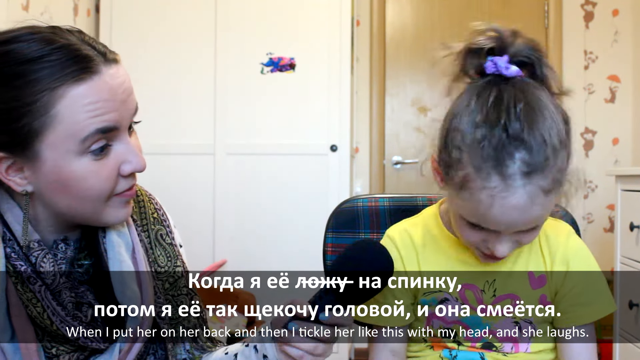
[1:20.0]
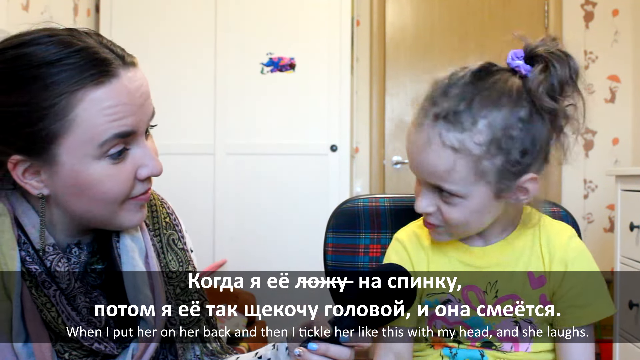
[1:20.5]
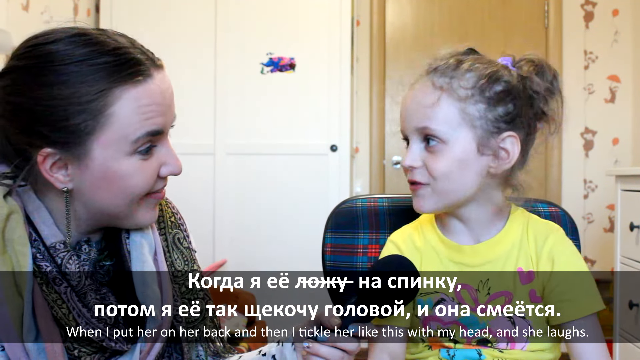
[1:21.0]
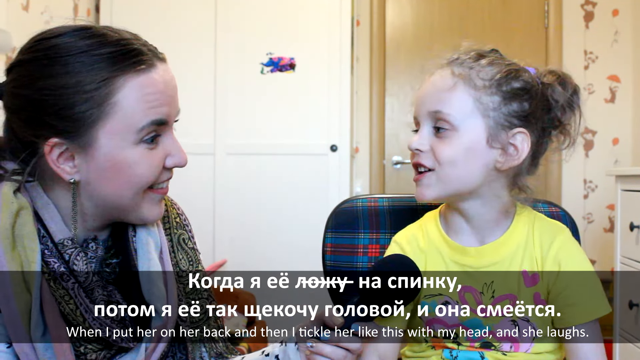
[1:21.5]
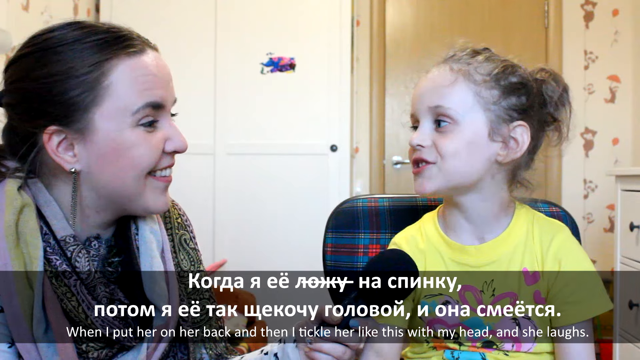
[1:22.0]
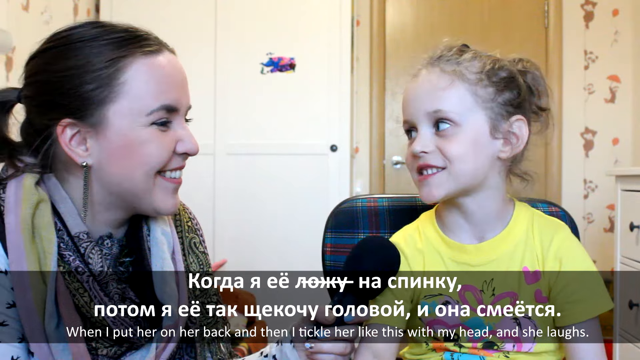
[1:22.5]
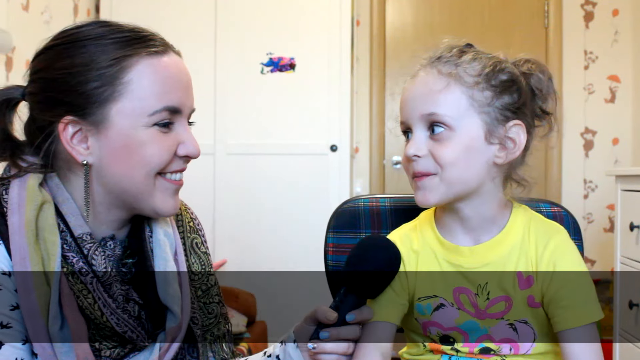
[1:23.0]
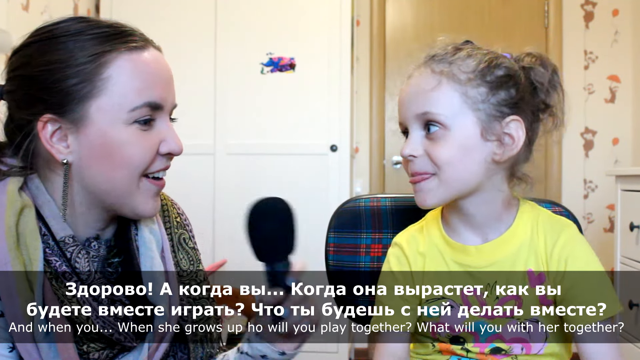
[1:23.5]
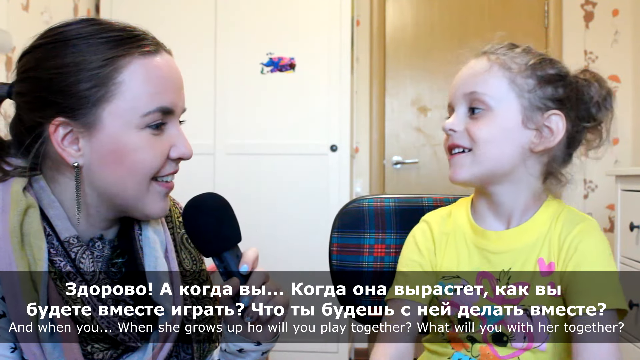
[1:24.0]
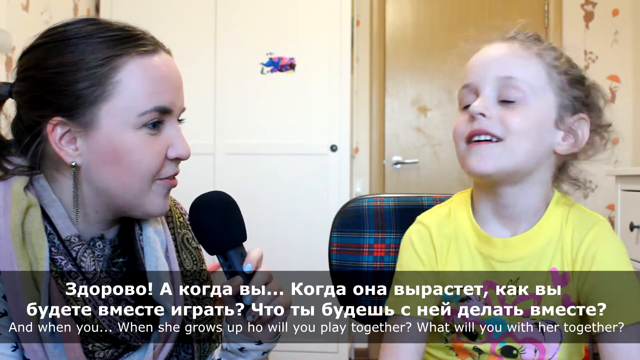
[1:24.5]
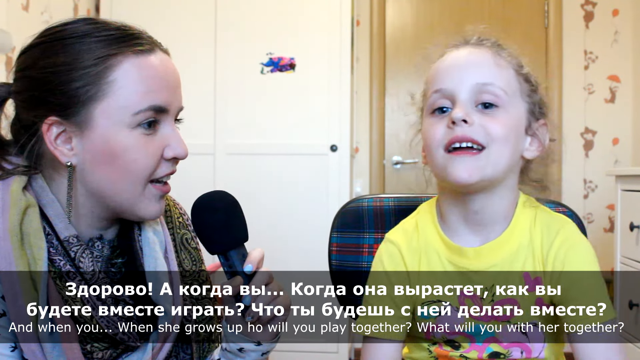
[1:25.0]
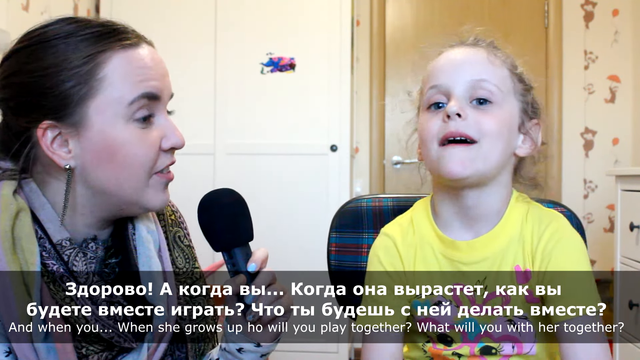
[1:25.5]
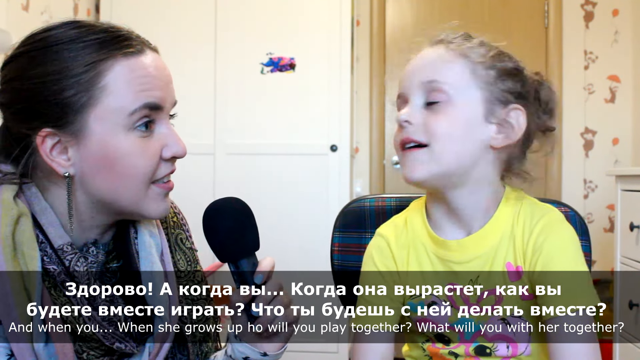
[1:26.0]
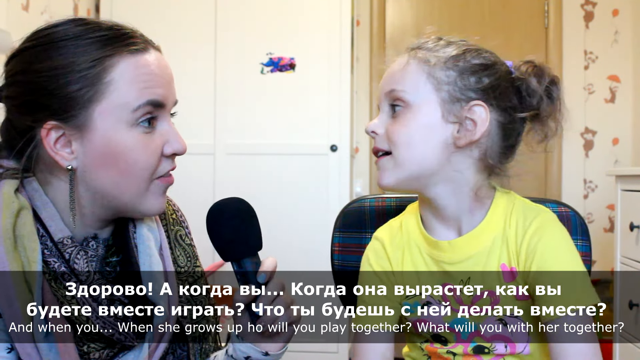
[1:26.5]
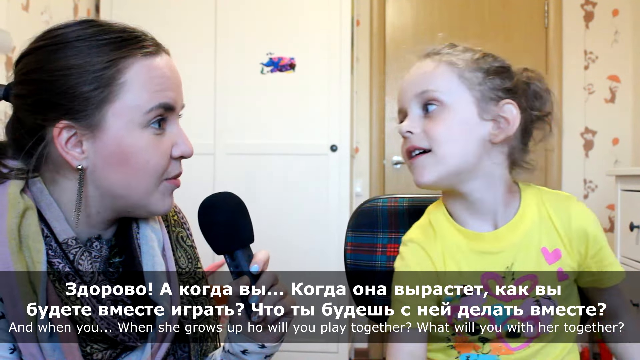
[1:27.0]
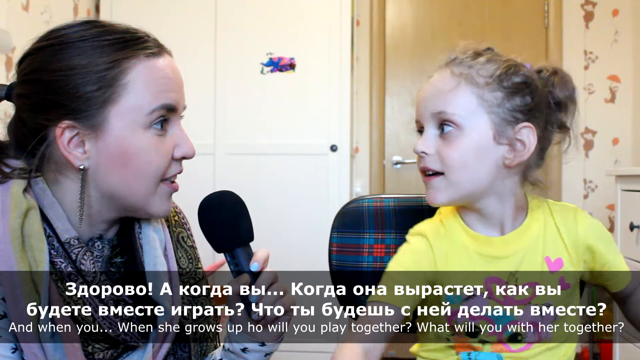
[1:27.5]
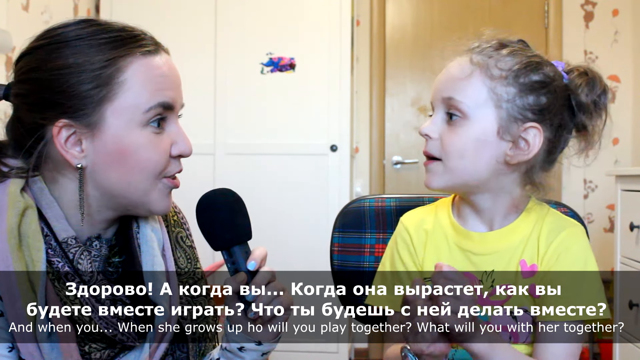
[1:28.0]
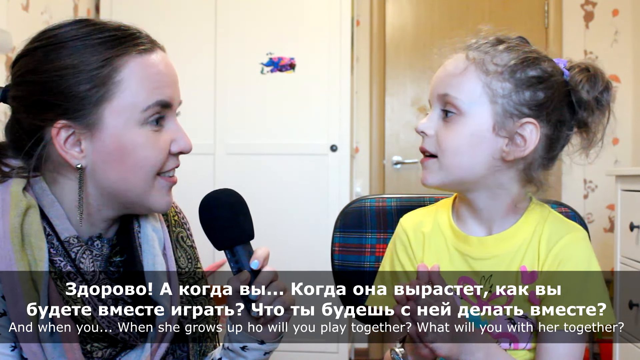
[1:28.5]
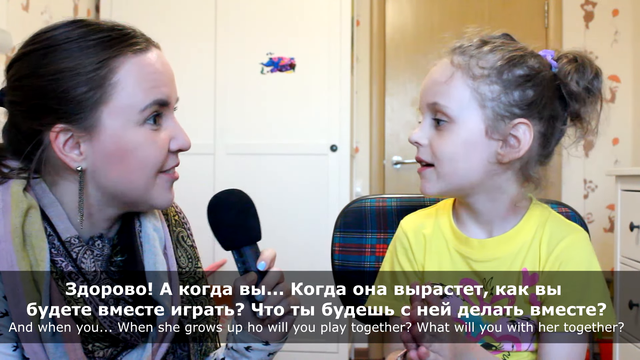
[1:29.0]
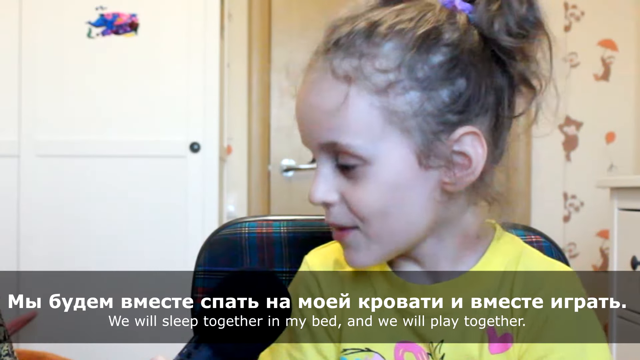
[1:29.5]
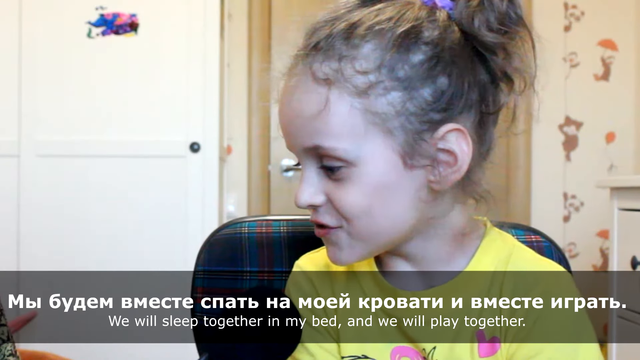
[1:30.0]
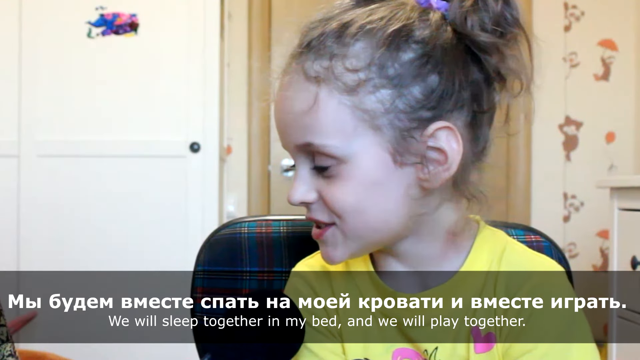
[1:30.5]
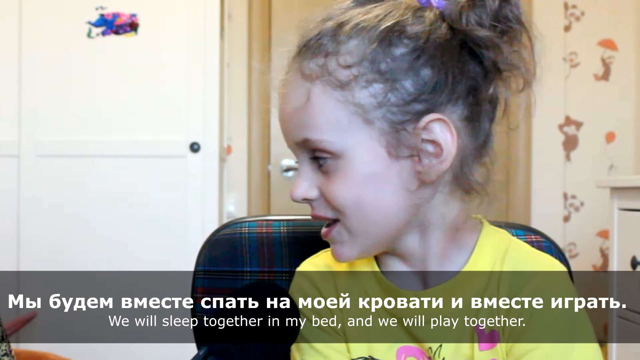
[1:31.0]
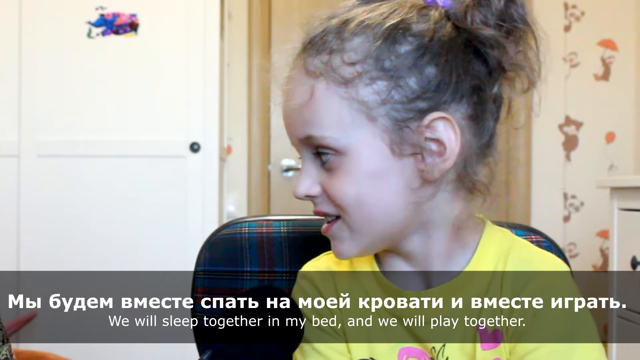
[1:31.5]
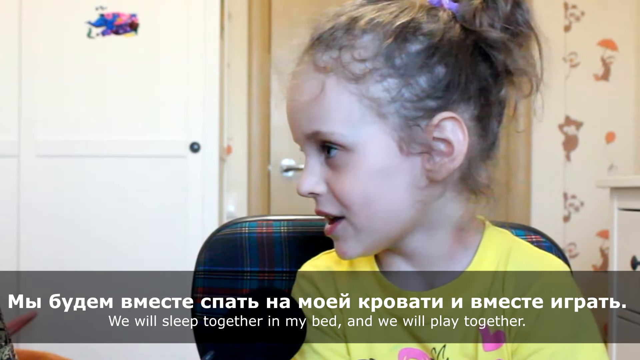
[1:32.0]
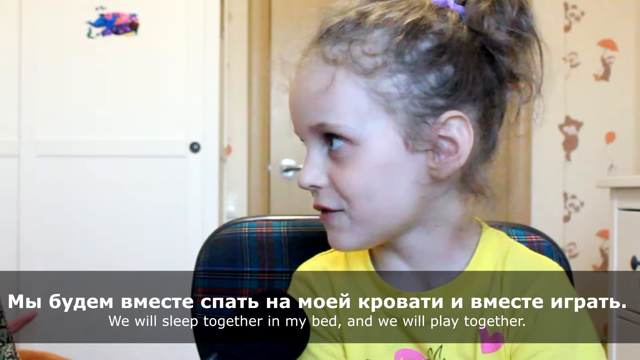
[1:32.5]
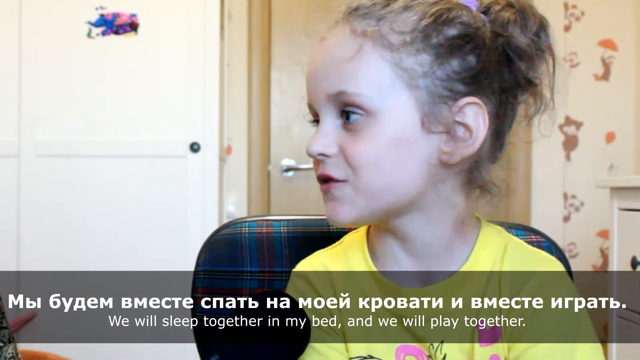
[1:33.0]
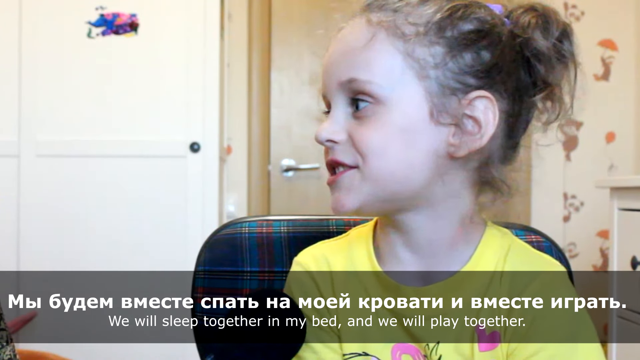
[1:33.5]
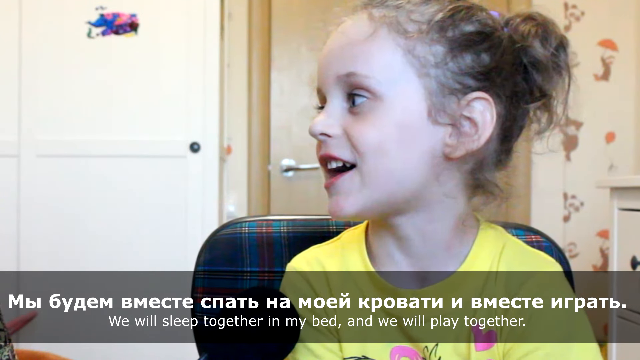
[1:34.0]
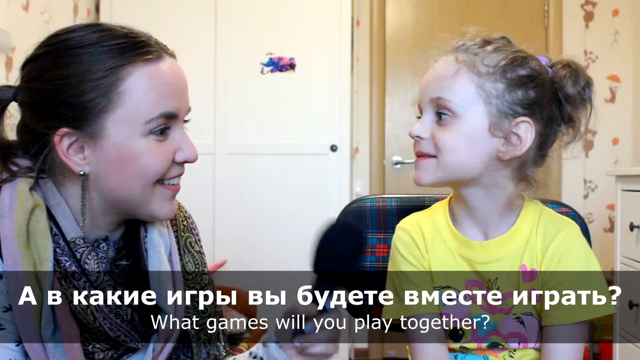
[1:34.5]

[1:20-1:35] The woman talks with Ksyusha about her baby sister Natasha, asking what games they will play together and how they will play together when Natasha grows up, since she is a baby now. Ksyusha says they will sleep together in her bed and play together, and the woman asks what games they will play. While the woman is talking, Ksyusha seems to lose a little attention: instead of looking at her, she looks off into the distance, plays with the chair she is sitting on, moves her hands around and dances back and forth a little in the chair. When she answers, the camera focuses on just her instead of showing both her and the woman next to each other. She smiles and looks happy and excited about playing with her sister in the future.